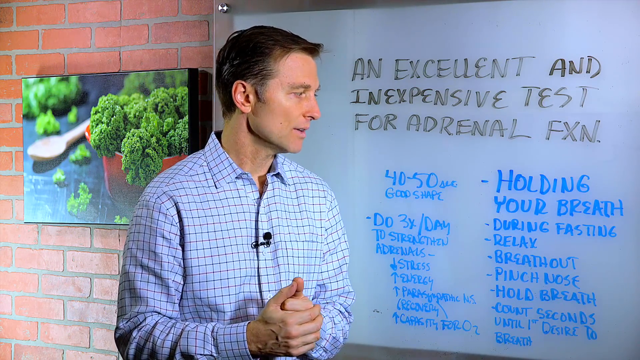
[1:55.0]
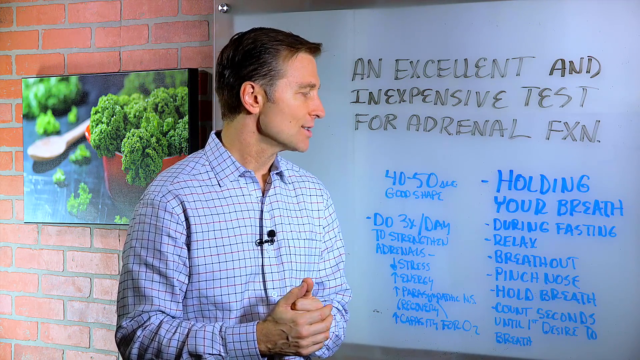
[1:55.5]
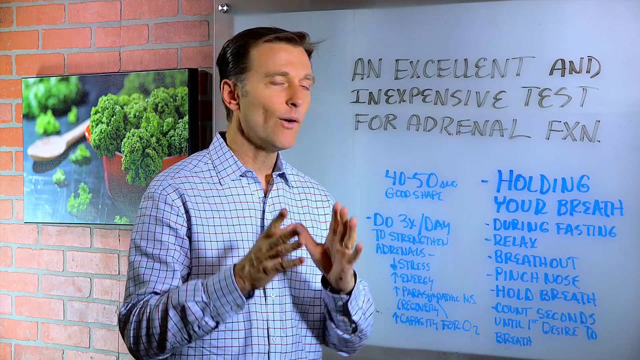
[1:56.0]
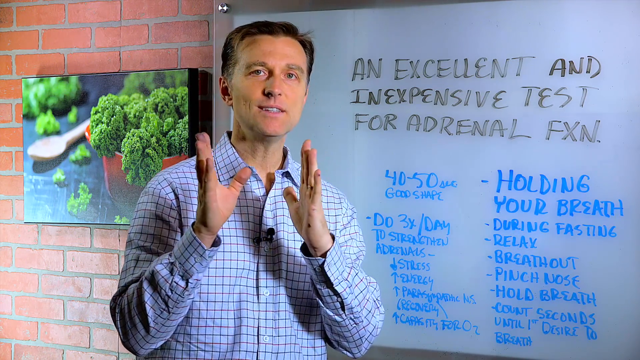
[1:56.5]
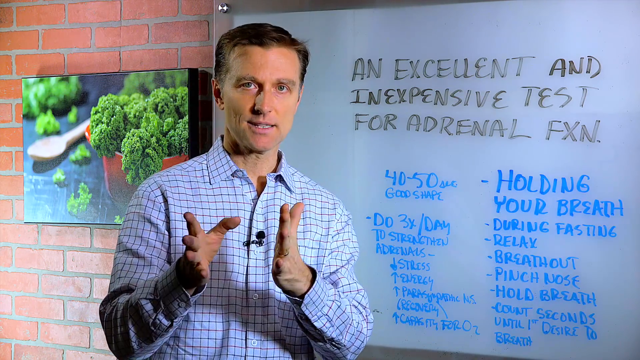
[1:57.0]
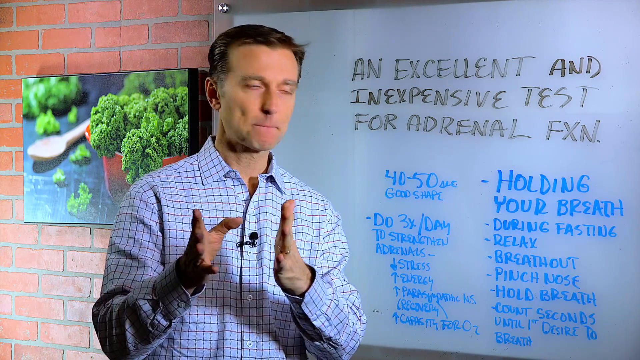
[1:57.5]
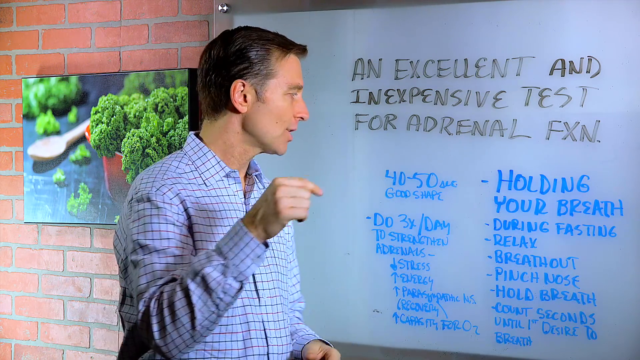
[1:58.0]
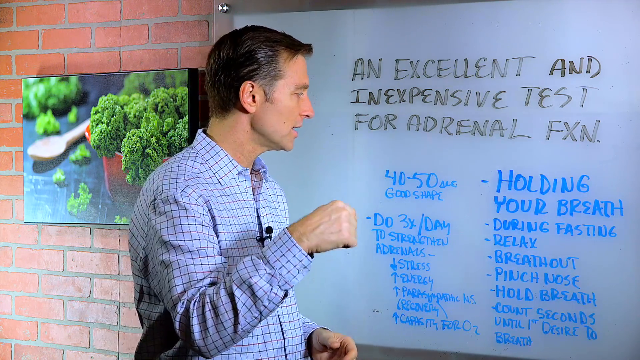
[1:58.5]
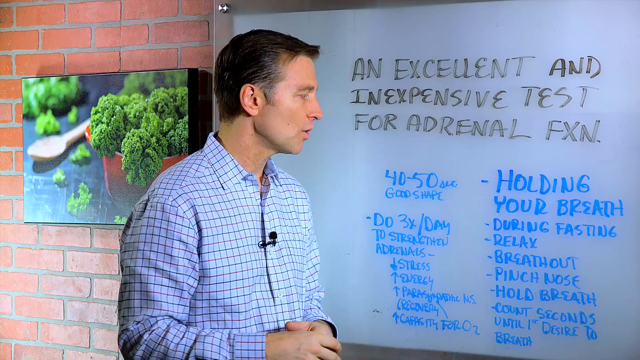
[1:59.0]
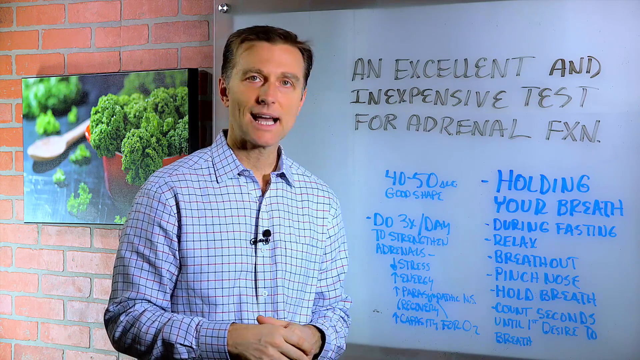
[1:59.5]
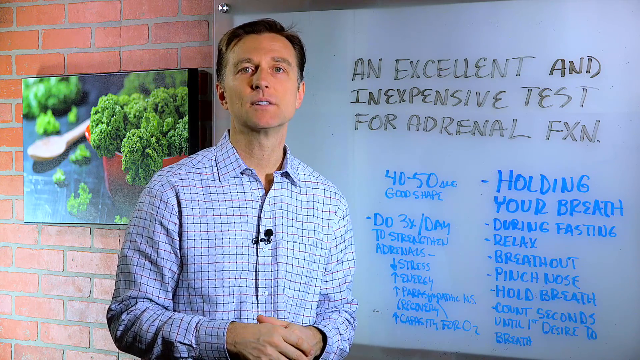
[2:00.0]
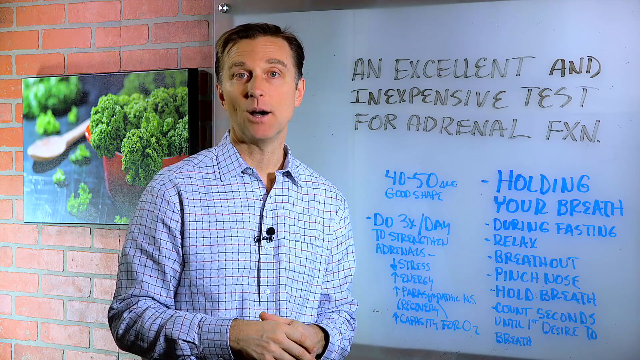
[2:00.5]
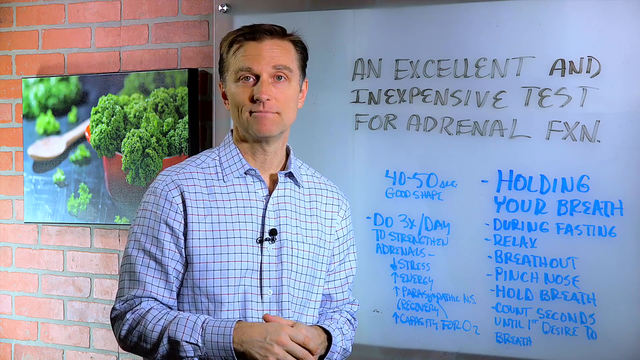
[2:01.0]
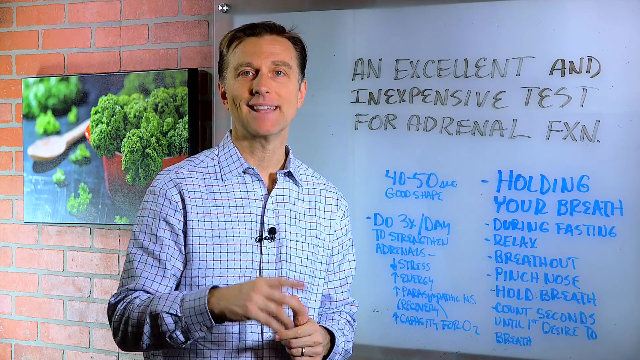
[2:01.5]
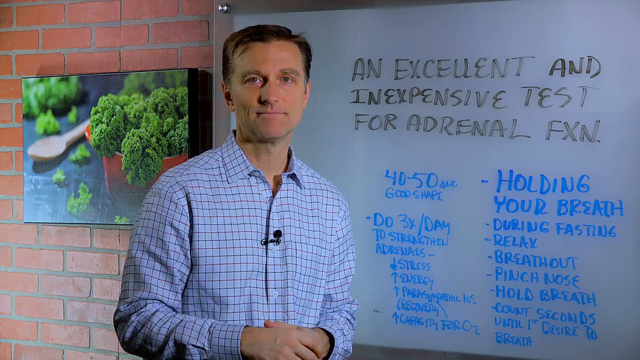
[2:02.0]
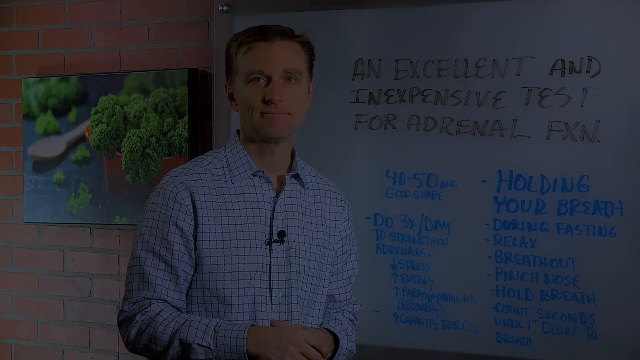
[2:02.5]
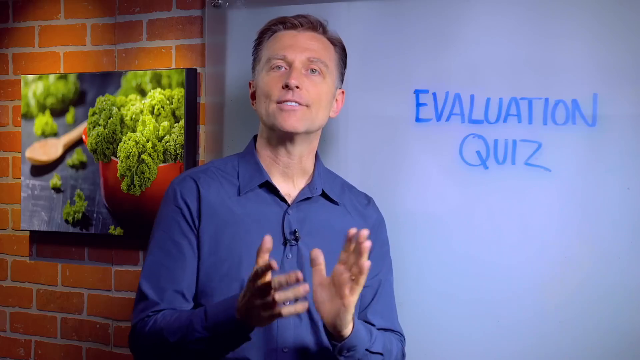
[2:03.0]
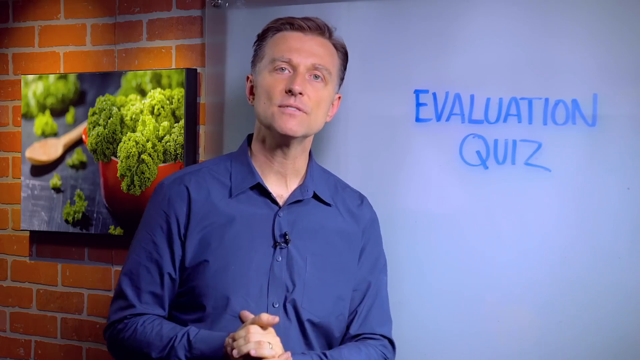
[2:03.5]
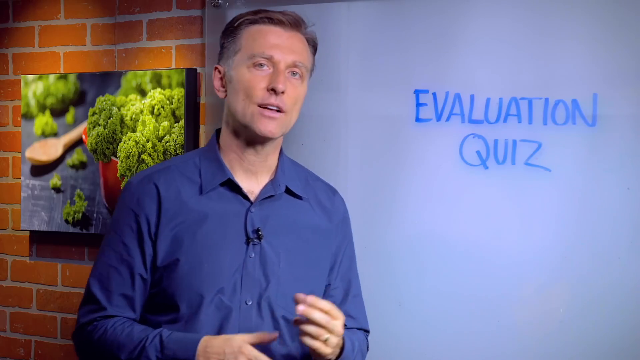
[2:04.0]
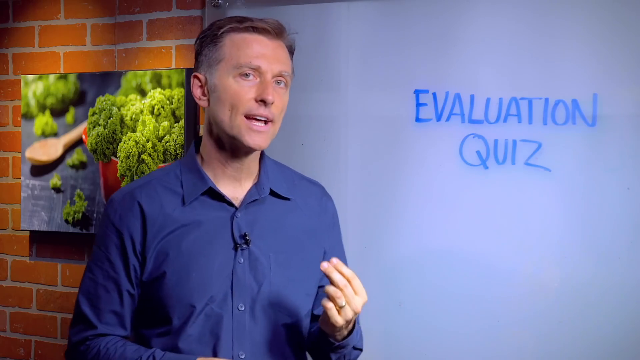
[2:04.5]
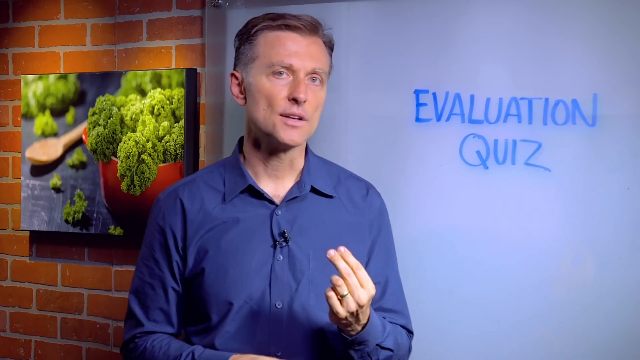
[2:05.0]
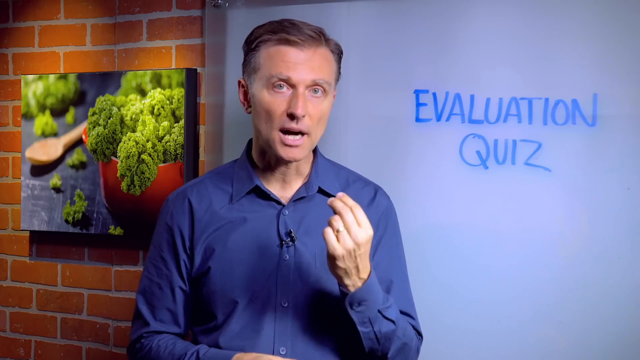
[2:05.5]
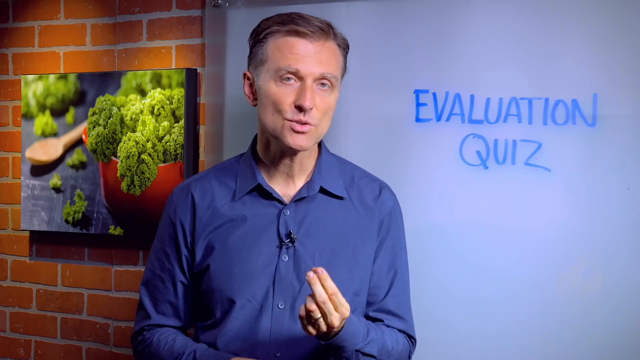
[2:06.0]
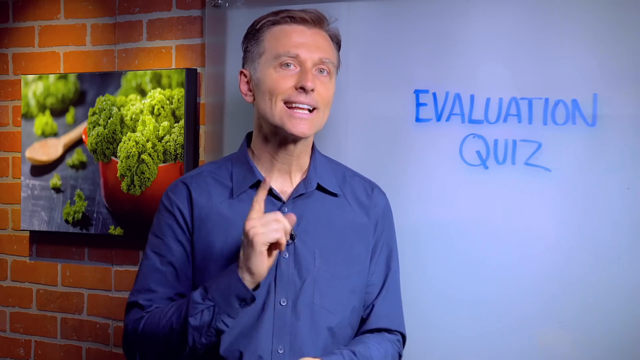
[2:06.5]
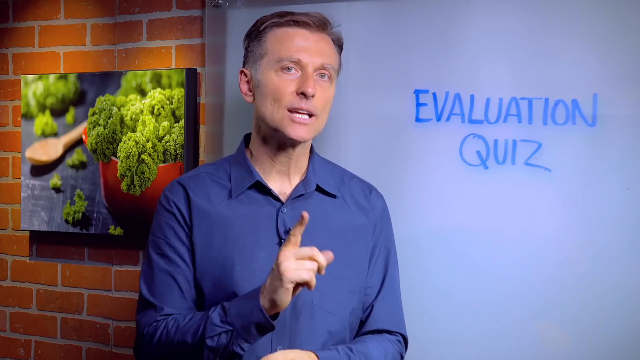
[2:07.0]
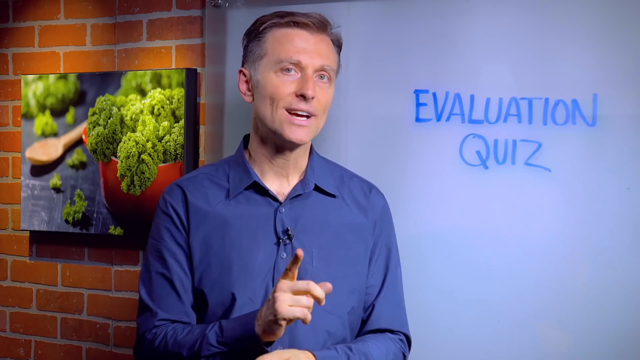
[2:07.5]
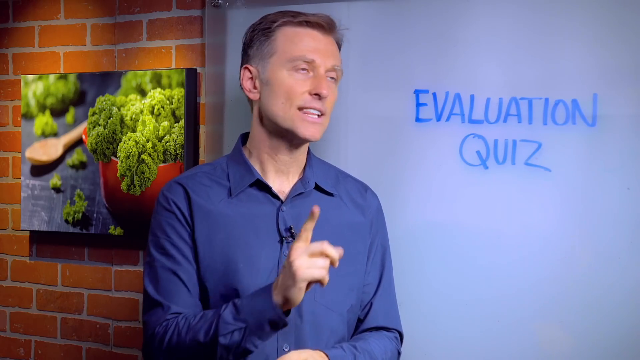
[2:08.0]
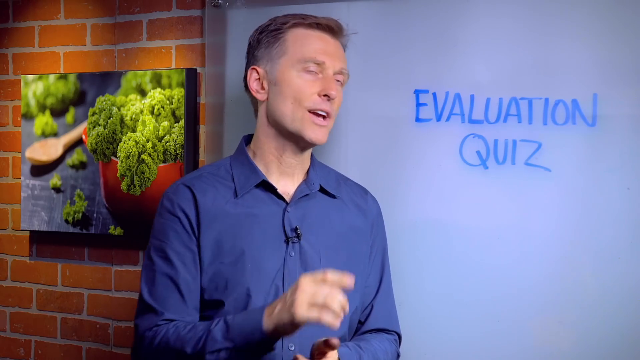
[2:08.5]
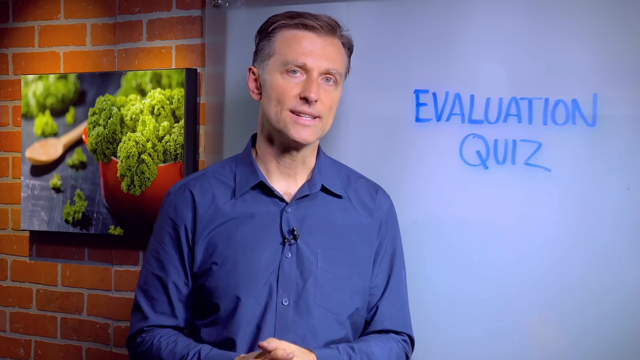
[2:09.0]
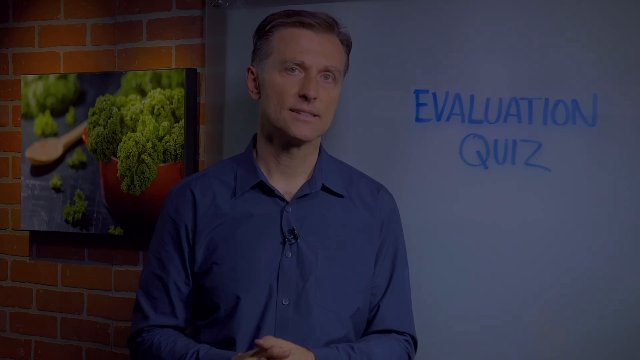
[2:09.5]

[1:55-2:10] At the lower right of the screen, a square with a pale beige background shows black capital letters reading "take the quiz". The man faces the camera and smiles. The video blacks out, and then the man appears in a different outfit, a deep blue shirt with a more open collar. Beside him, written on the whiteboard in large blue capital letters, is "evaluation quiz". He talks and gestures with his left hand, then lifts his right hand to point with his index finger. At the lower right corner of the screen appears a profile picture of the man on a circular background, smiling brightly.